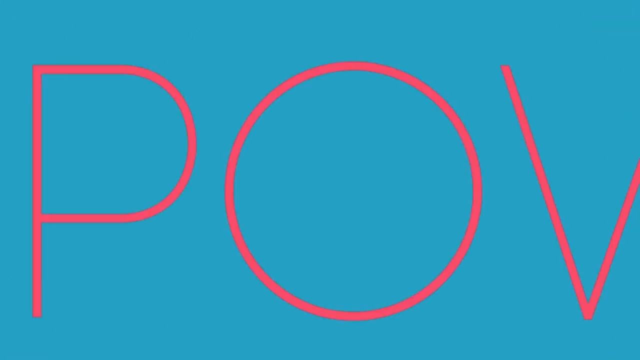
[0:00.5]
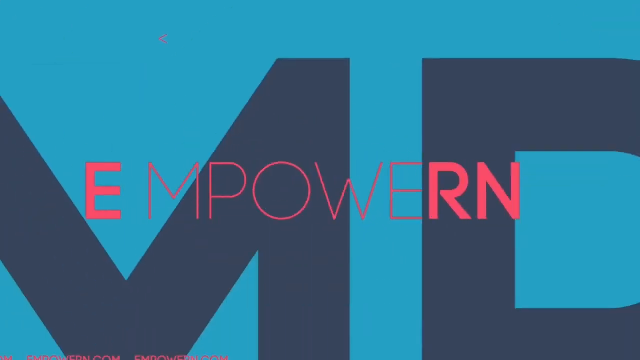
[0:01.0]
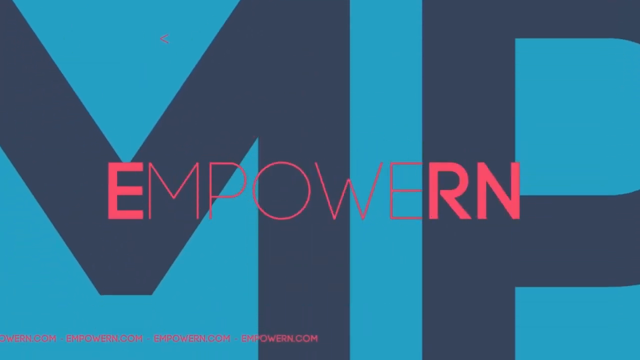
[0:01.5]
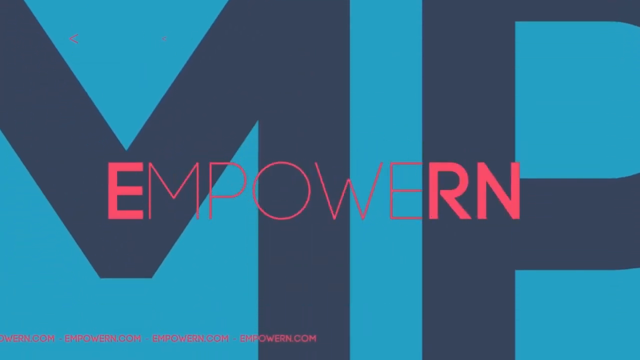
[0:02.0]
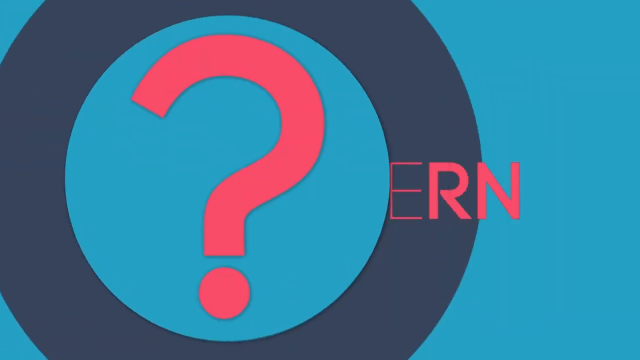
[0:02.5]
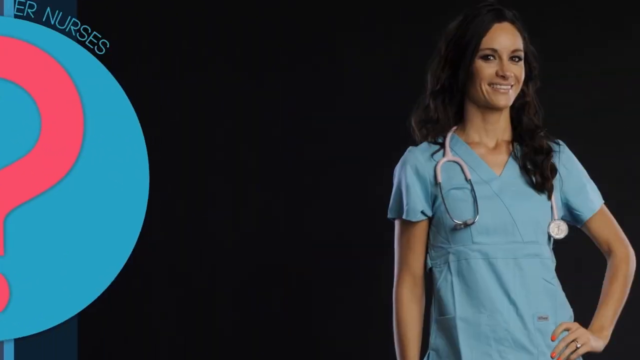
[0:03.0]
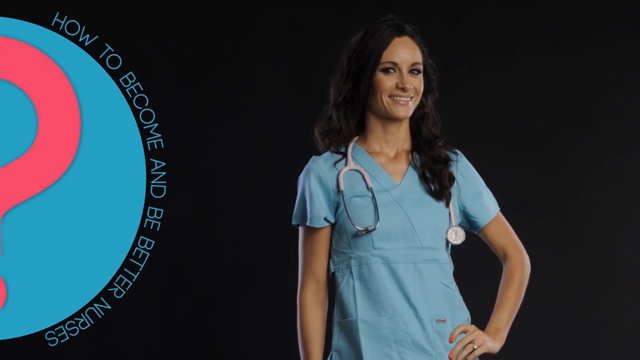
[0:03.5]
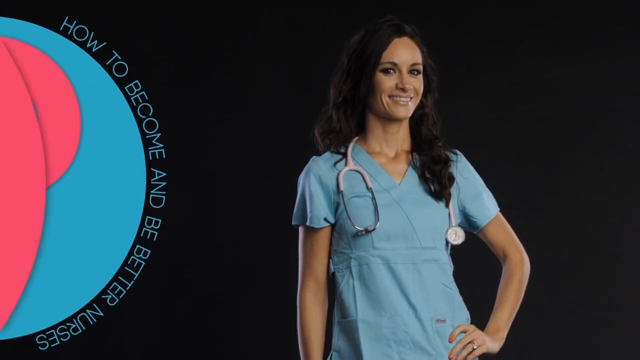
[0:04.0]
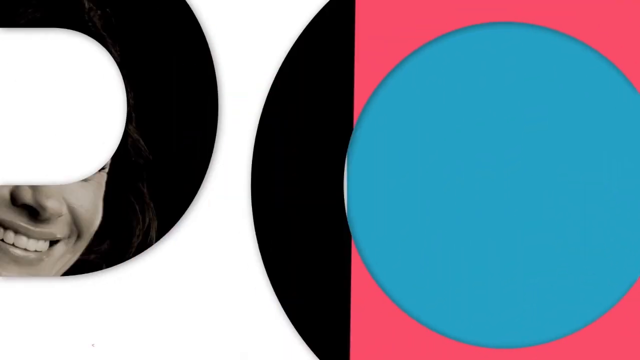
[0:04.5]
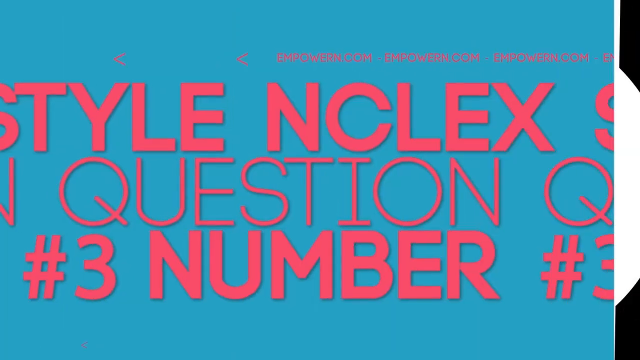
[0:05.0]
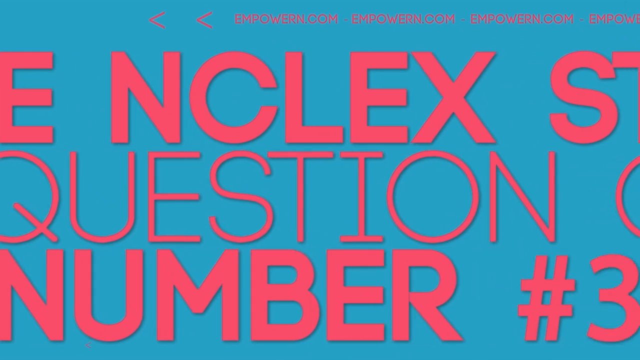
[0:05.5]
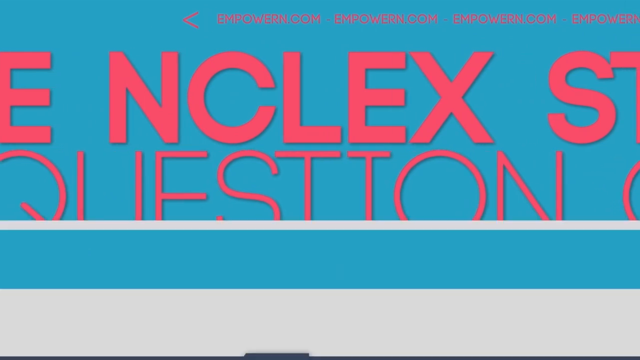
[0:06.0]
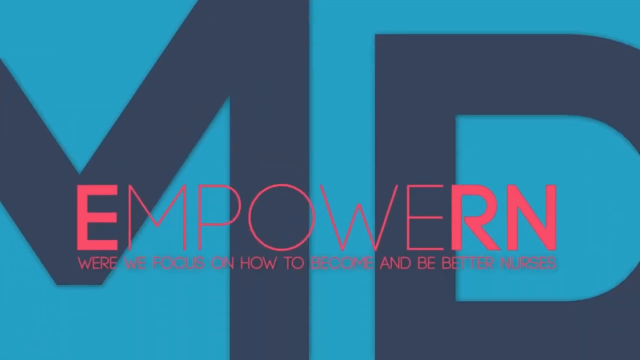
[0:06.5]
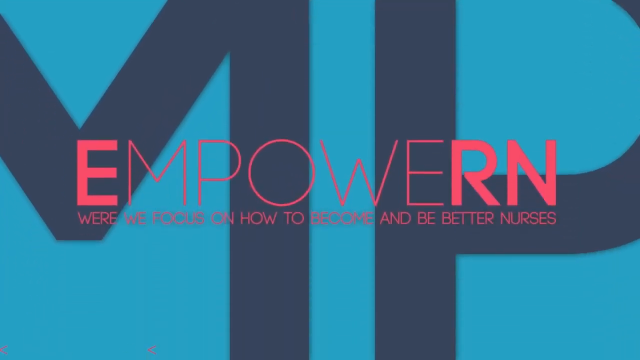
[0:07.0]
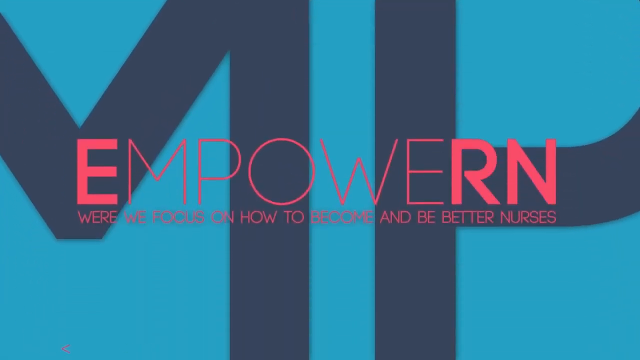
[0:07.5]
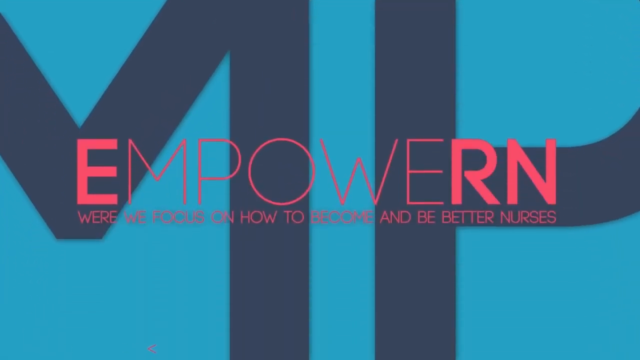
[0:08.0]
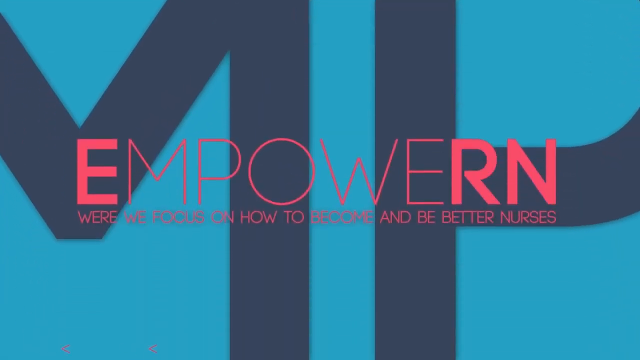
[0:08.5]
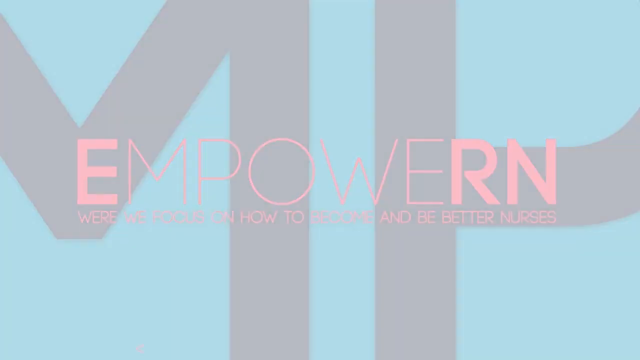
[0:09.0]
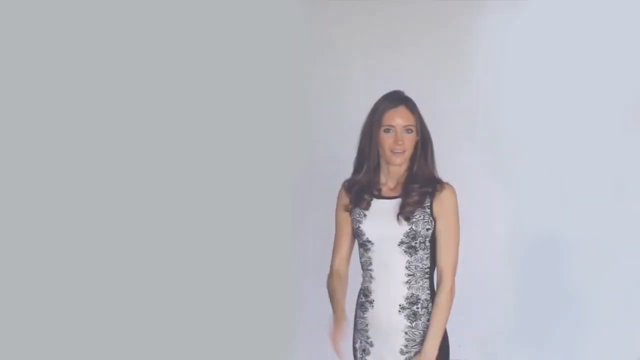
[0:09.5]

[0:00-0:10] A series of medical-related clips opens on a tealish background with navy and pink font. Toward the left side there is a small teal circle with a pink shape in it, surrounded by text that says "how to become and be better nurses." Toward the right side is what looks like a stock photo of a nurse: a smiling woman with long dark hair in a light blue scrub top with a pink stethoscope around her neck. Very fast-moving graphics follow: pink font appears briefly, then the teal, navy and pink background. Next, a woman in a black and white floral dress appears against a white background, speaking as she gets ready to present a topic.